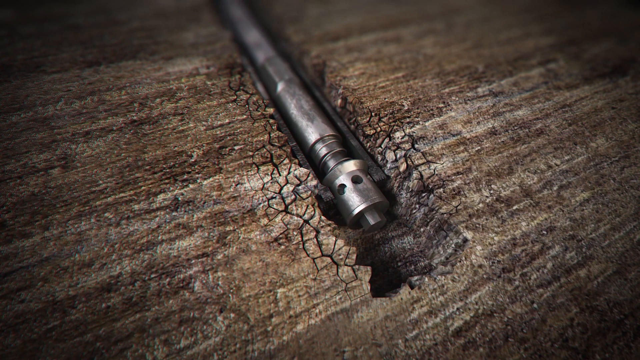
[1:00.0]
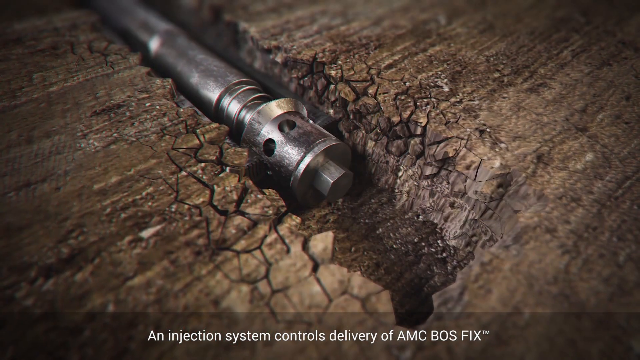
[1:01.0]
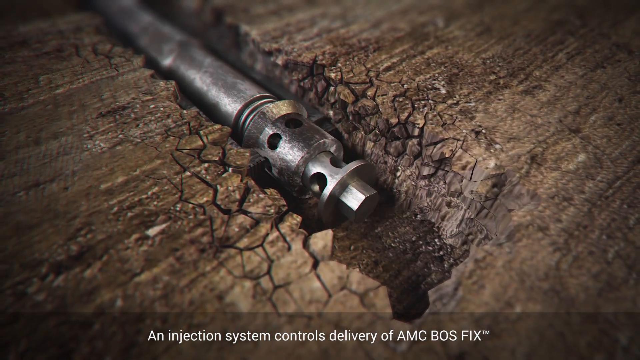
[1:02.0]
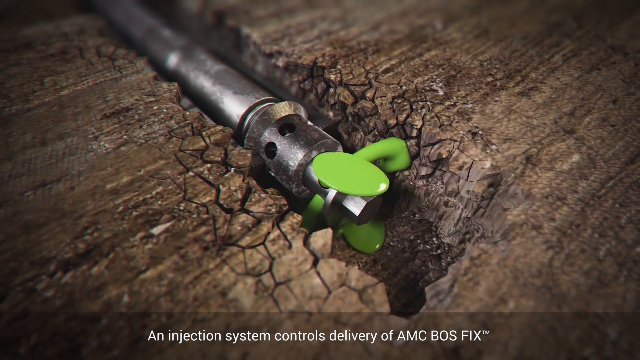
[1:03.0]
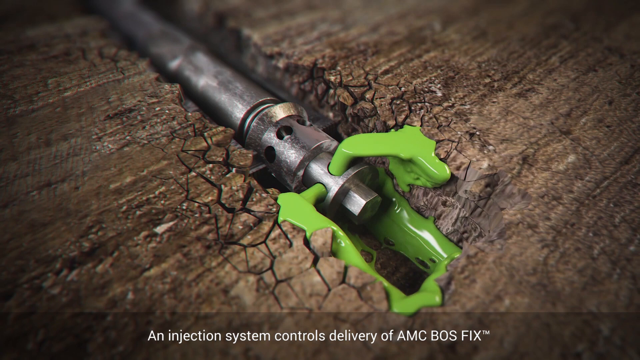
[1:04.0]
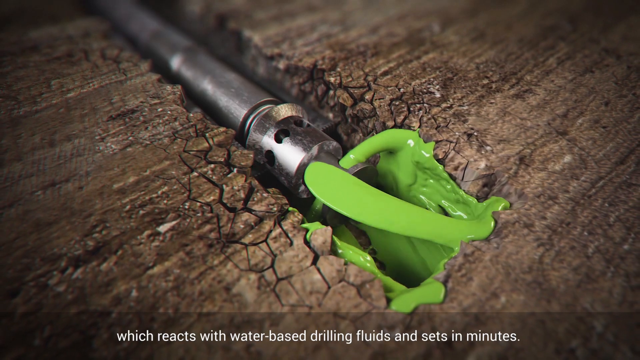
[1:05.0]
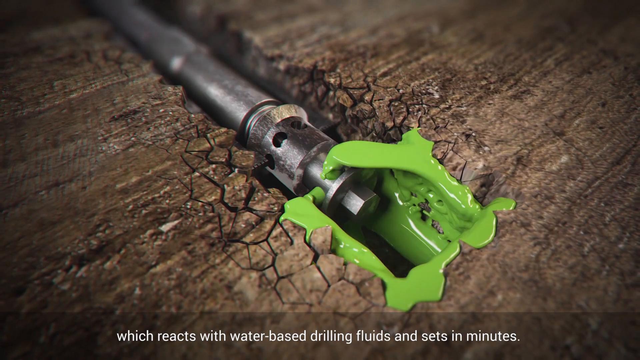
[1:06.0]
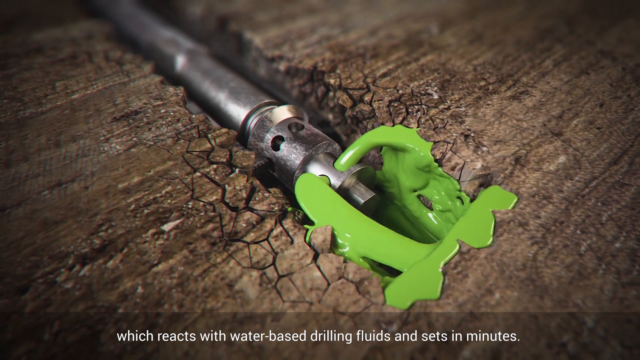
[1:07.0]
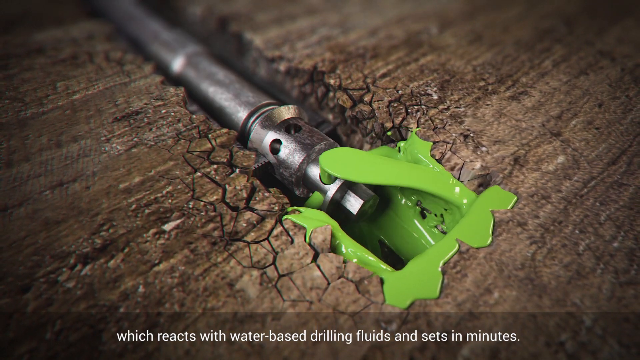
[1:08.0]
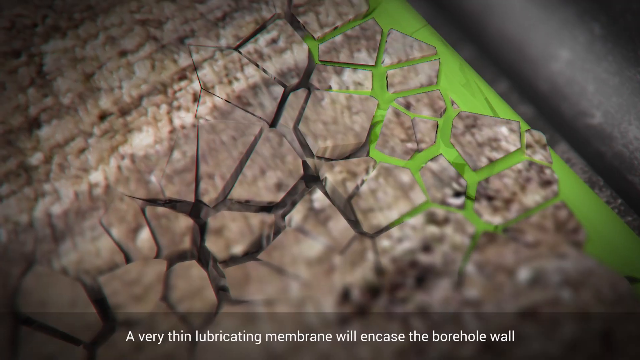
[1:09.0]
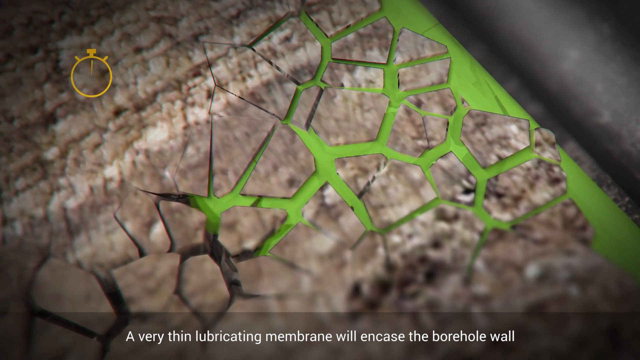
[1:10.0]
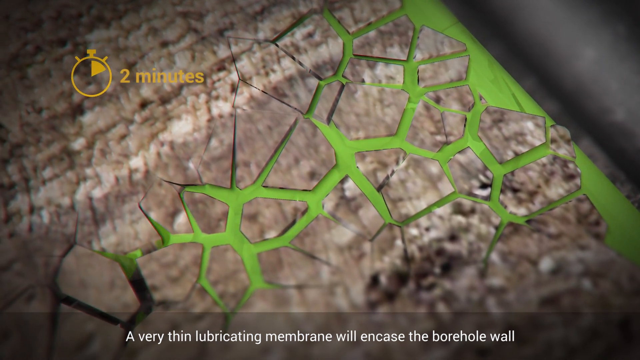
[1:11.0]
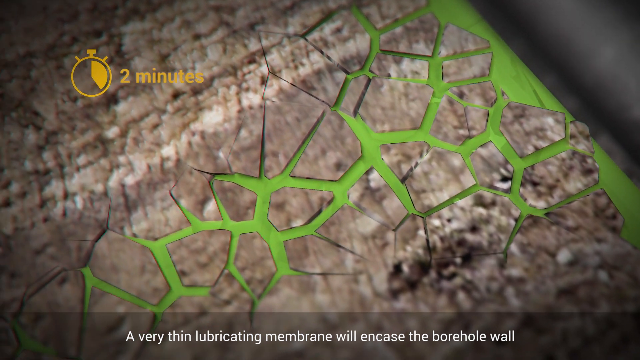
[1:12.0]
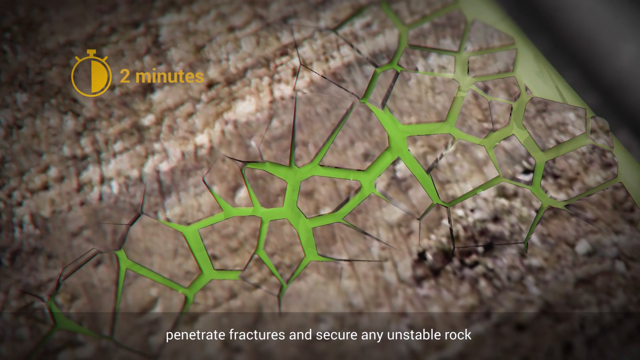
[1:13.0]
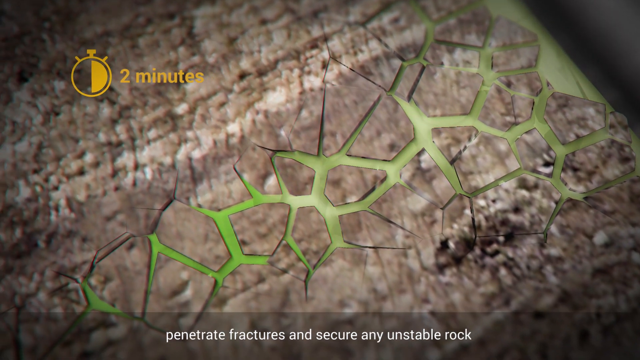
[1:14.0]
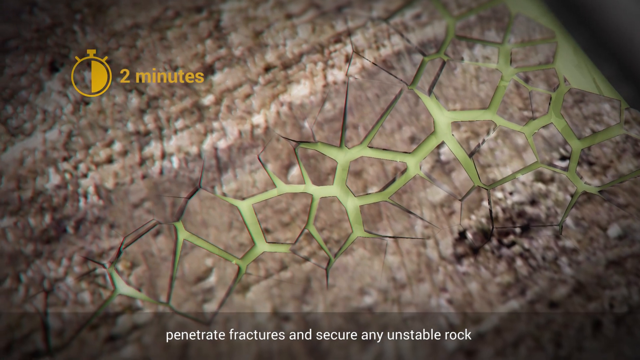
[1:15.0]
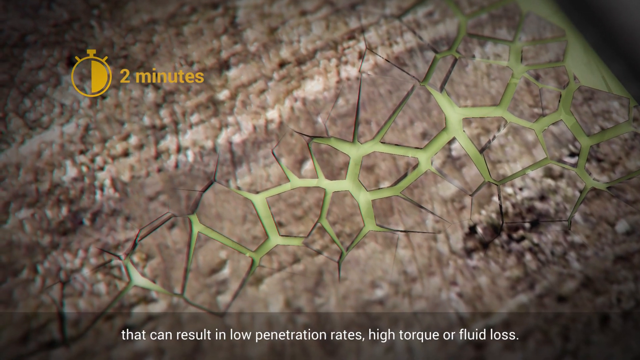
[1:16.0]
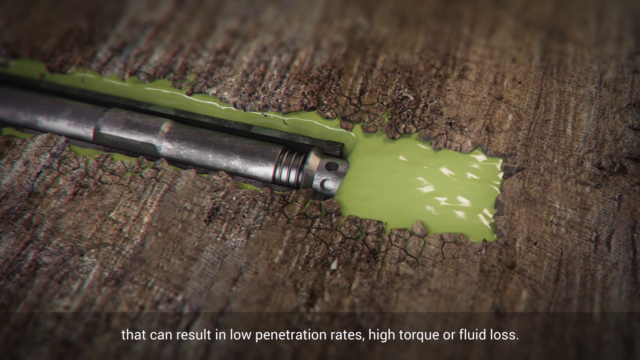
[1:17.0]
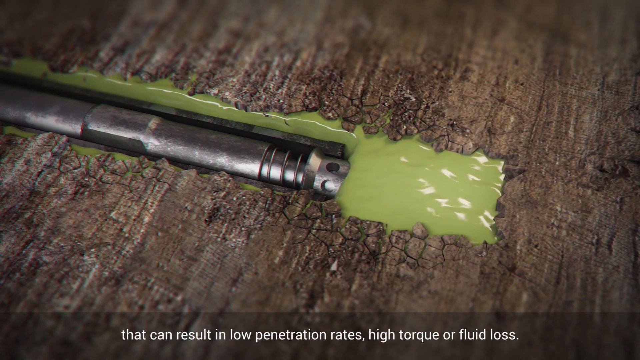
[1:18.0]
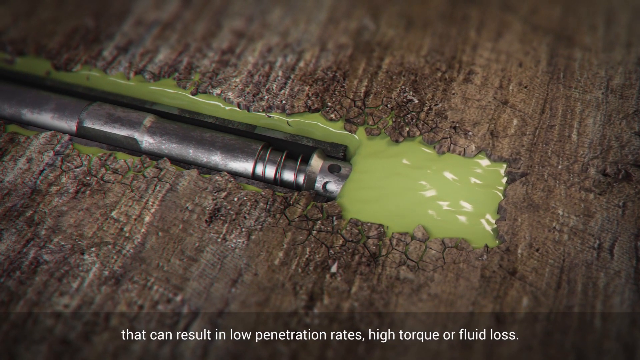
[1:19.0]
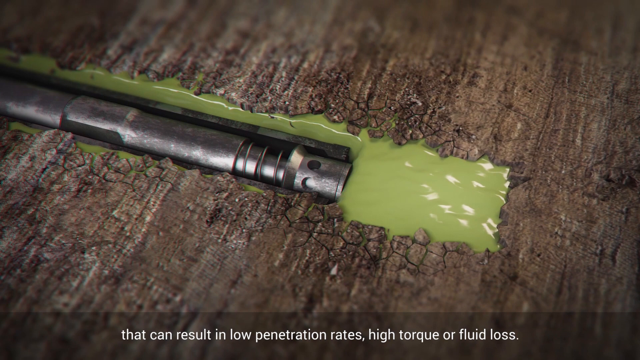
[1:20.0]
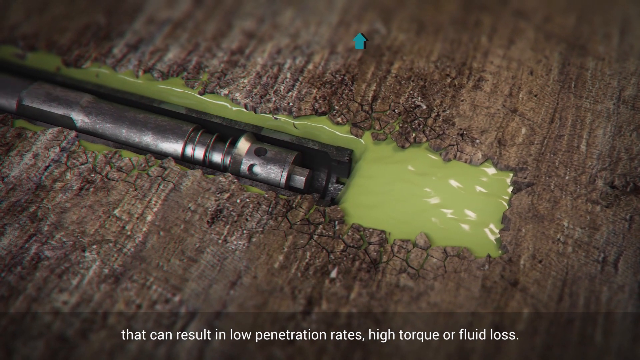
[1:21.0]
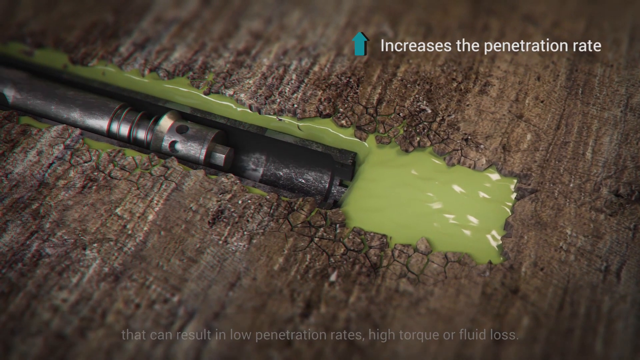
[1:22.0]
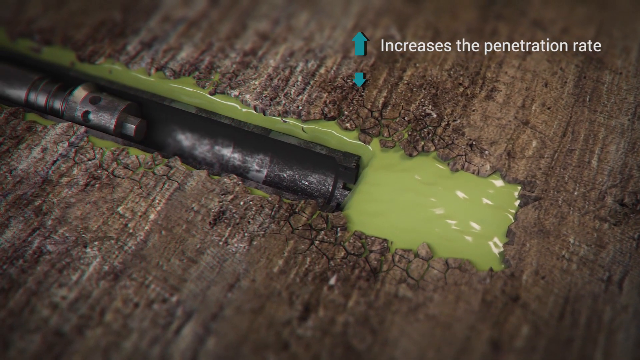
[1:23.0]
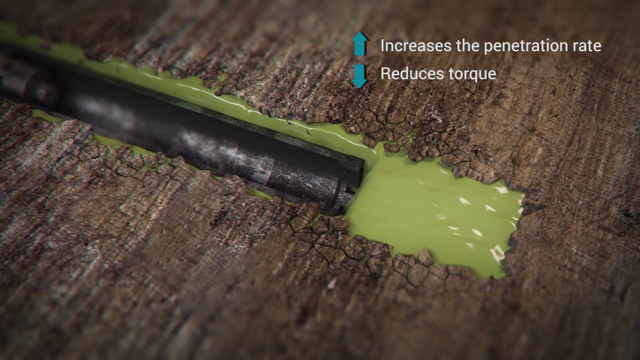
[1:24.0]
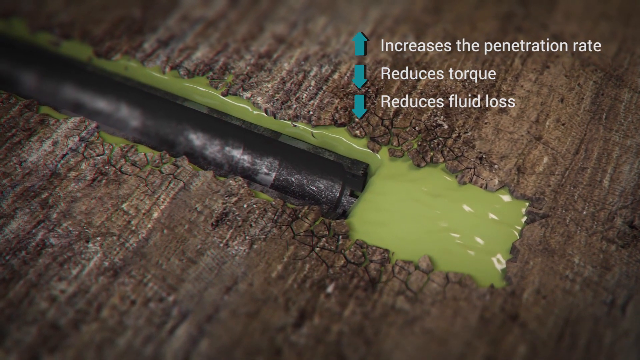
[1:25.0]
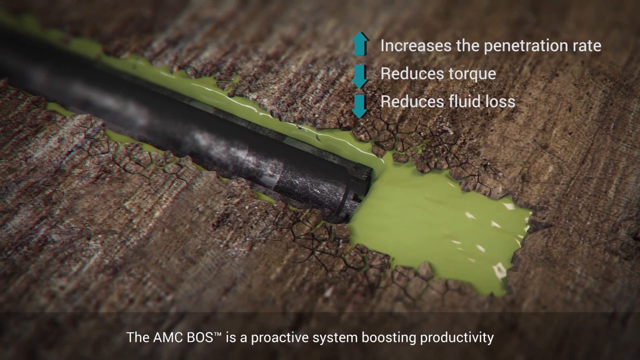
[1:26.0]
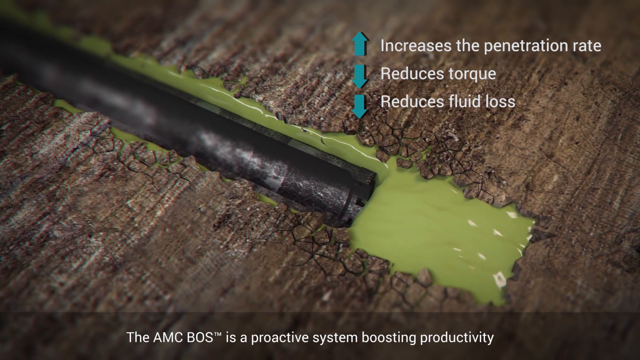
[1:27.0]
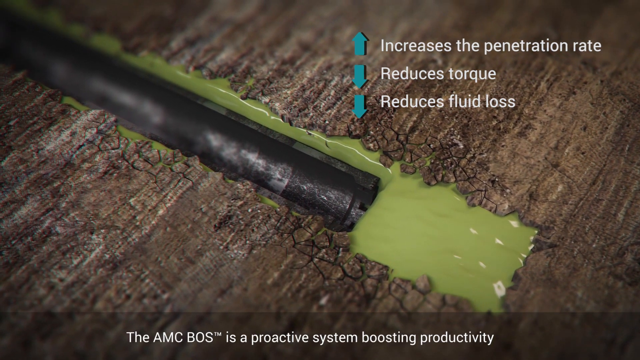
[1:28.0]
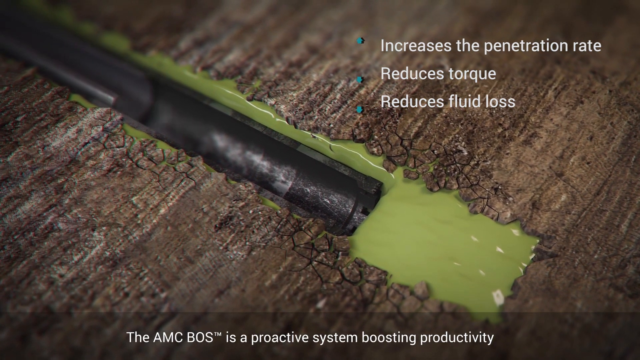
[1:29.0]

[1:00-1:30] With the drill bit fully emptied, it now excretes a substance shown in green on the screen, which looks goopy. It comes out of several holes at the end of the drill bit and fills the holes and cracks in the soil, completely filling the drilled holes and the cracks and crevices far below the surface. It is also shown filling up the sides of some of the drilled hole. The drill bit that deposited the substance is retracted, and the other inner housing of the drill bit comes back down. It appears that different drill bits can be retrieved and replaced, one to carve out pieces of the rock or soil and another to deposit substances that fill holes and cracks.